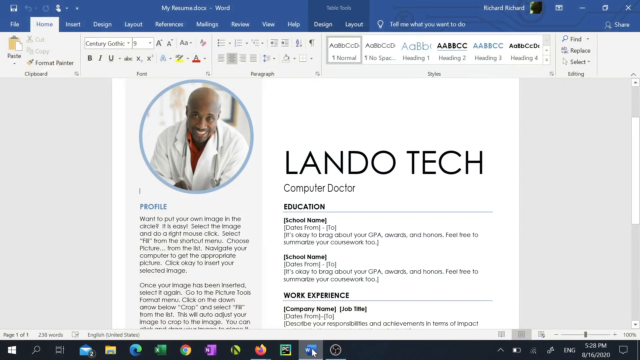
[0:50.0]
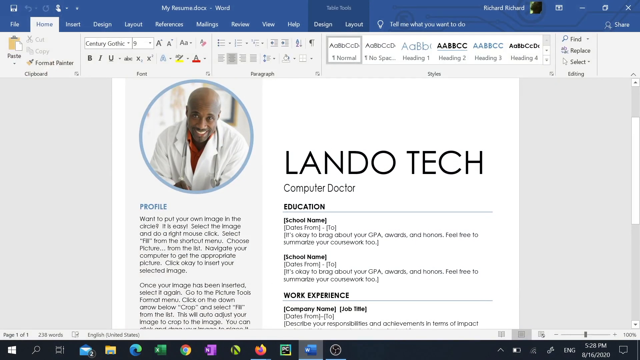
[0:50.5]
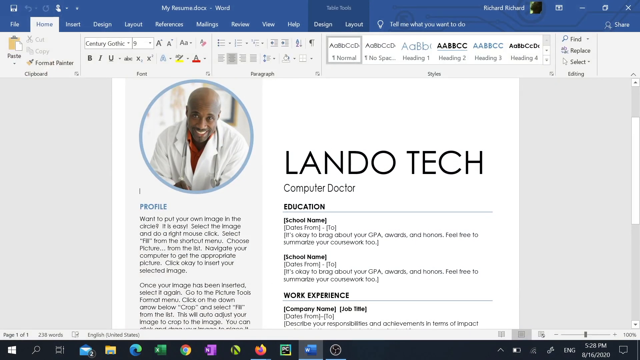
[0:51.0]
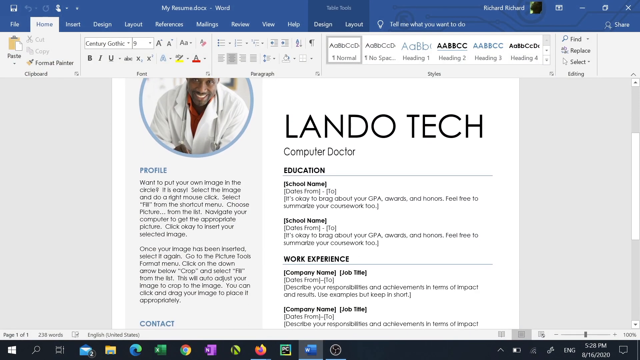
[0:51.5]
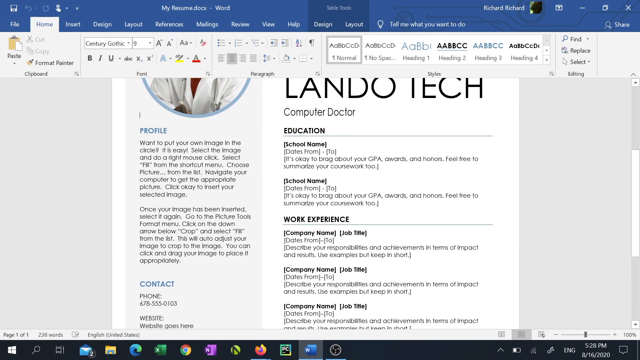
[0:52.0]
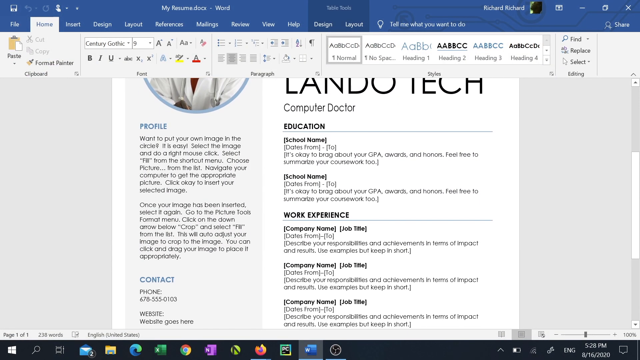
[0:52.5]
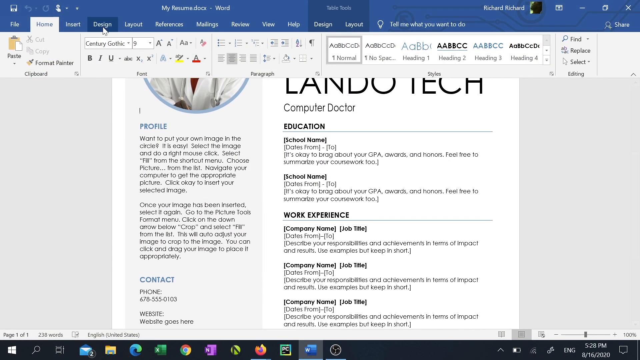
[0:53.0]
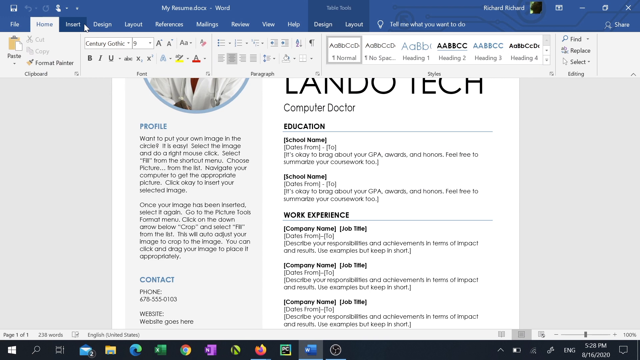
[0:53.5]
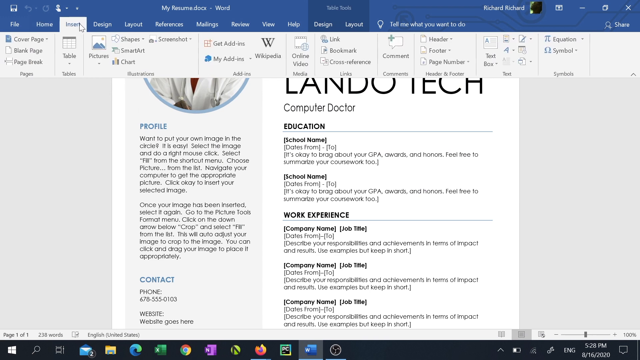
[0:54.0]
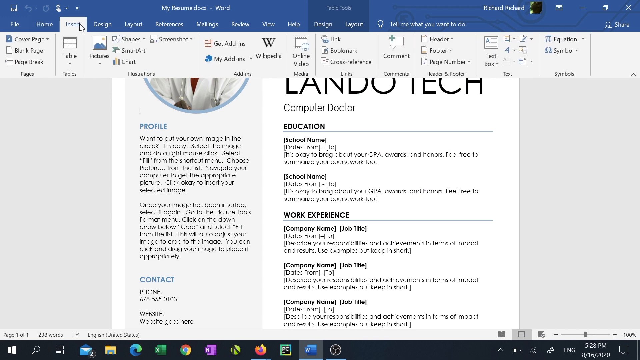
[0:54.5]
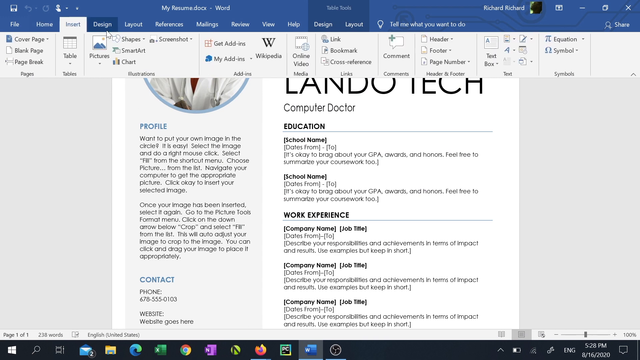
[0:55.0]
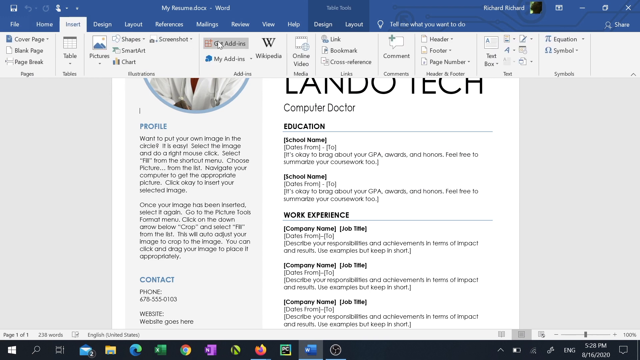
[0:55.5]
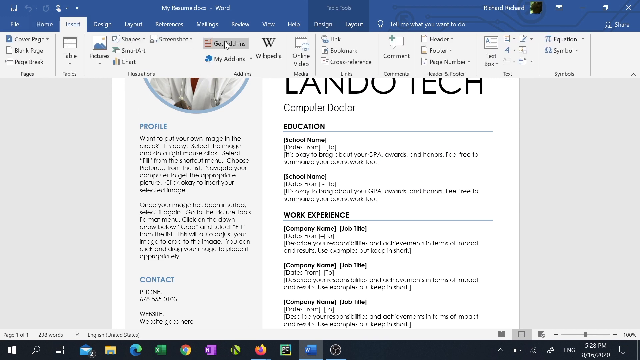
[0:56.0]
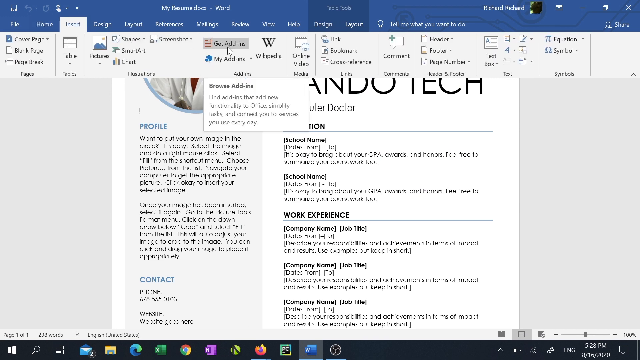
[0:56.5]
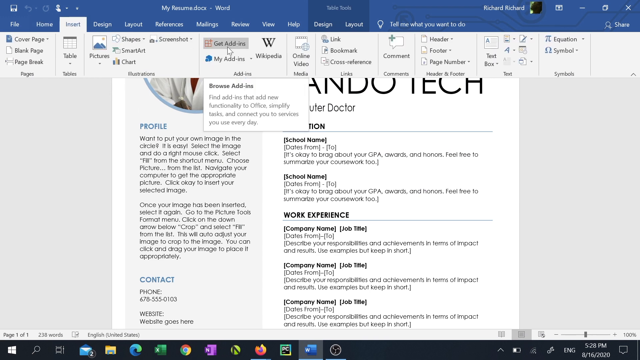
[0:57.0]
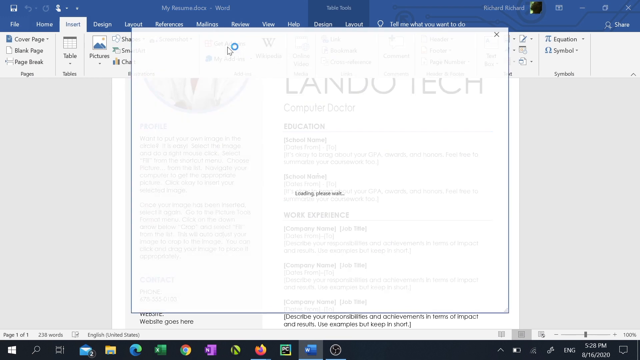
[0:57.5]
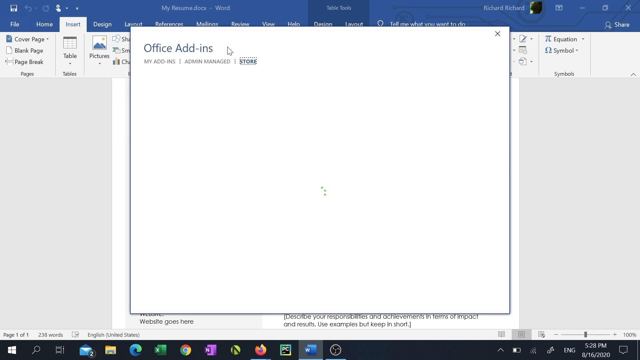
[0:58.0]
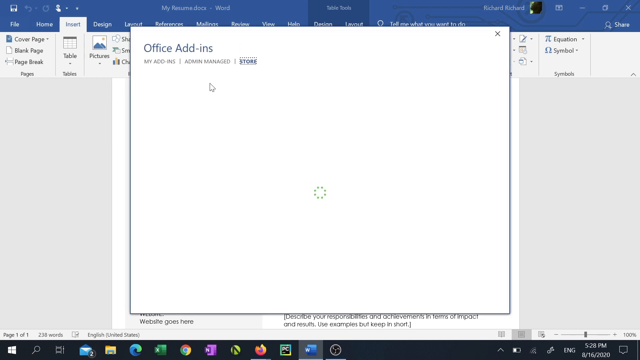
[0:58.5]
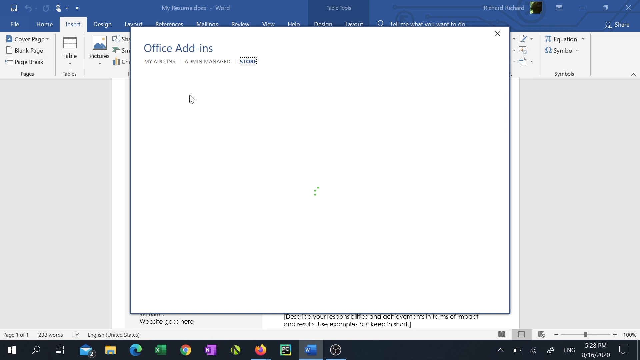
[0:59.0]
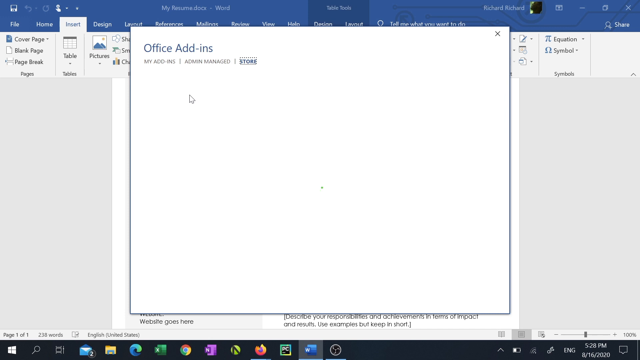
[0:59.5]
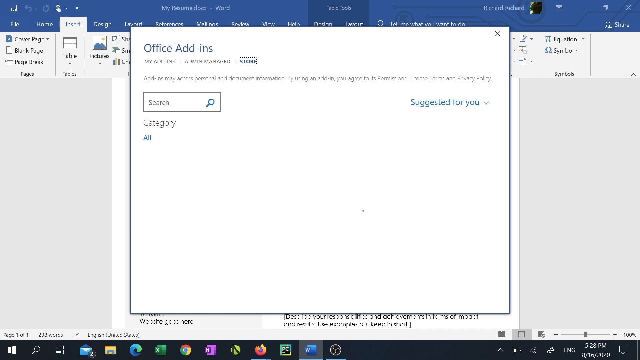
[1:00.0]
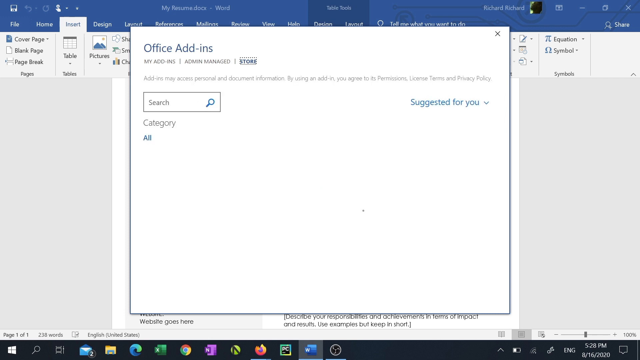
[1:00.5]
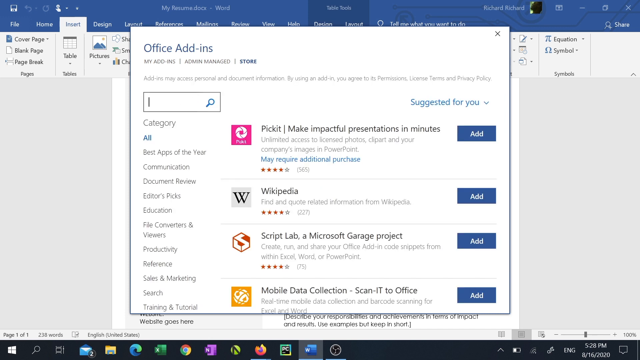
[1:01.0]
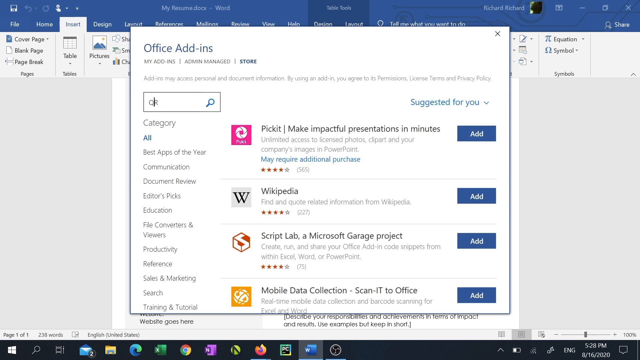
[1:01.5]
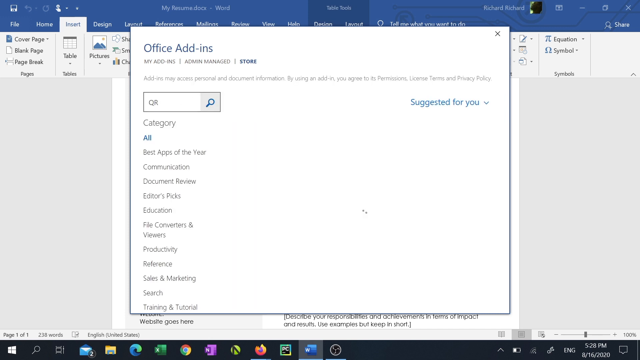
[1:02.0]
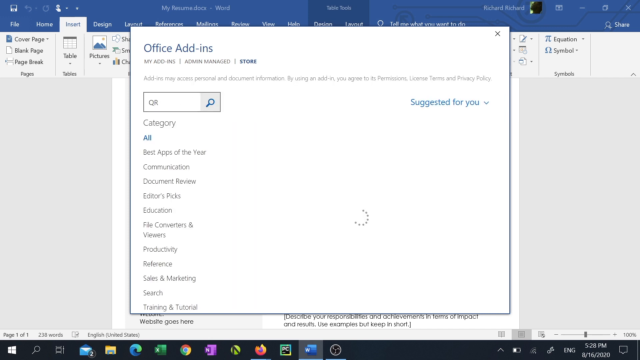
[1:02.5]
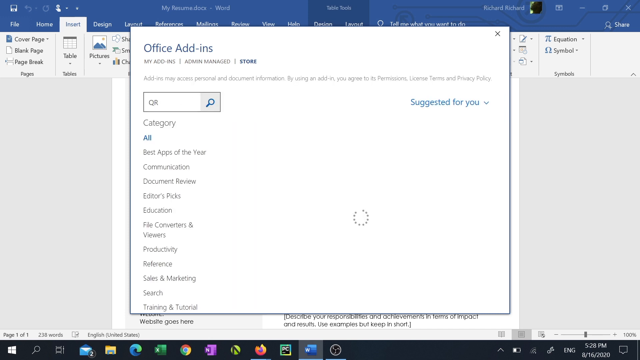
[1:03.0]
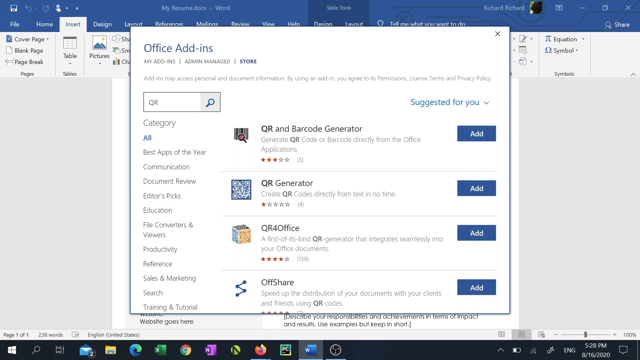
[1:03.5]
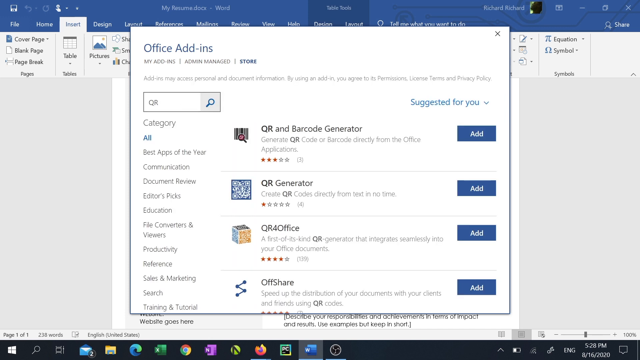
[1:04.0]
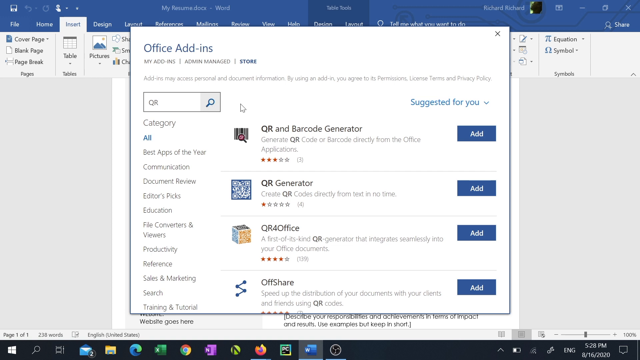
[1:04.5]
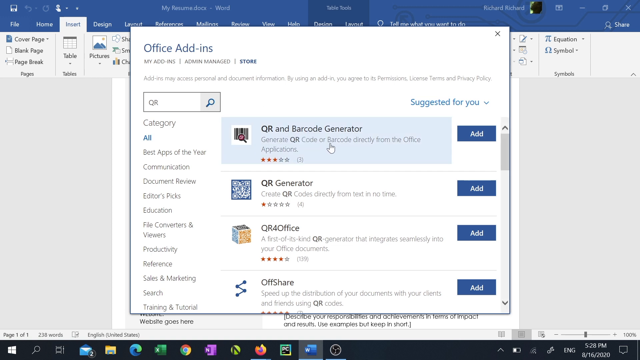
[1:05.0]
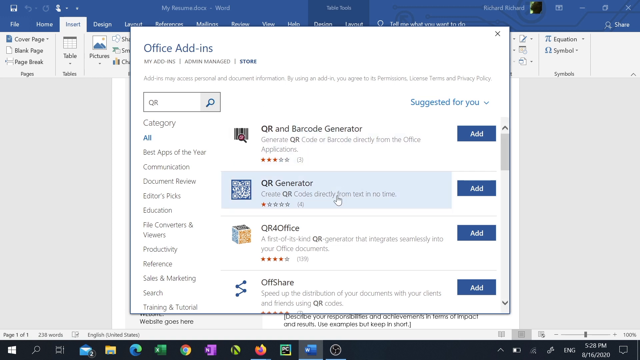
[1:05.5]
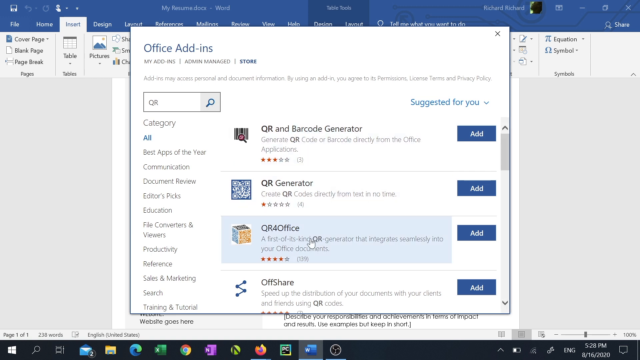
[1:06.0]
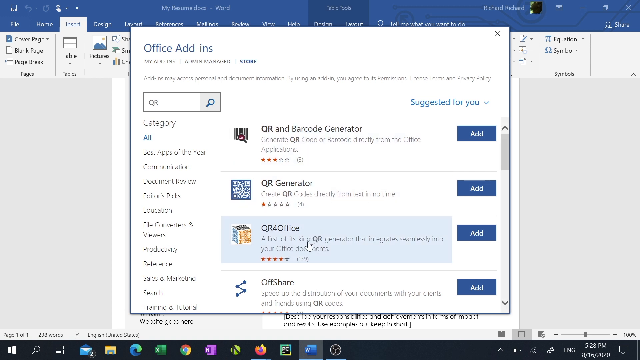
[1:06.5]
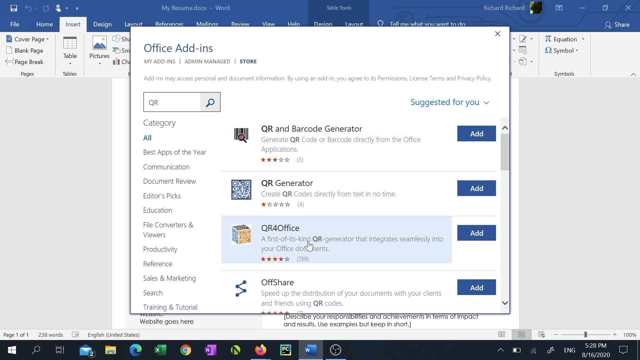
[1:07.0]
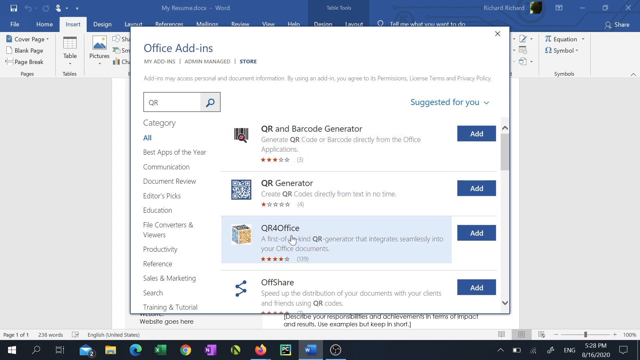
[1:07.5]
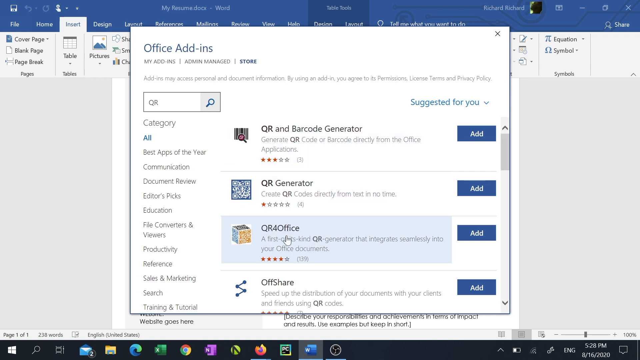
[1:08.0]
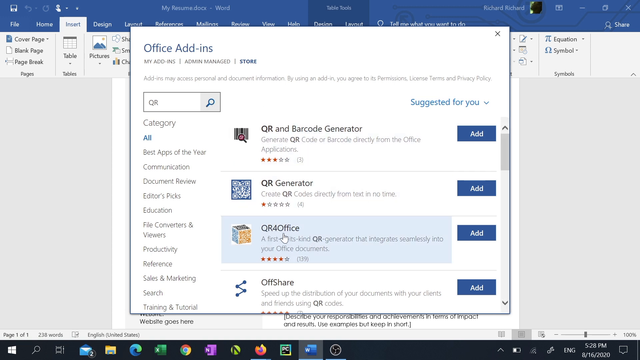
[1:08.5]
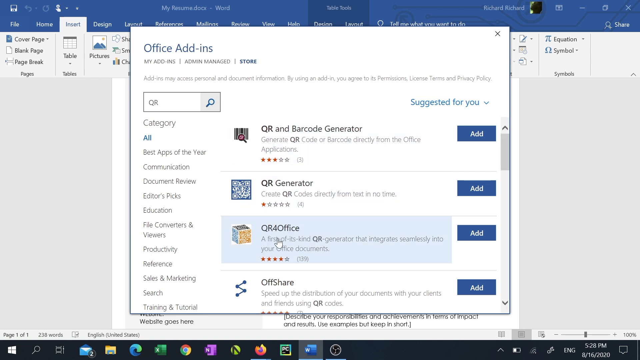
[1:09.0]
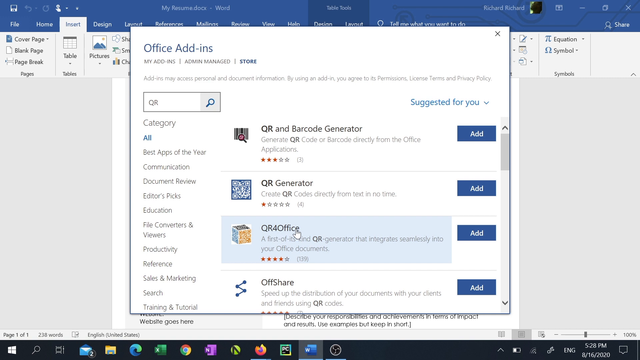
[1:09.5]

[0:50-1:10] What looks like Microsoft Word is open, showing a page filled in with text and images. In the upper left corner is a circle containing a smiling black man wearing a white doctor's lab coat with a stethoscope around his neck. Underneath him it says "Profile", followed by text reading "Want to put your own image in the circle? It is easy. Select the image and do a right mouse click." The document is probably a pre-made template. On the right side it says "Lando Tech Computer Doctor", and underneath are "Education", "School Name", "Work Experience" and a lot of text. The mouse moves around, and at the top it reaches "Get Add-ons", which opens a screen titled "Office Add-ins" with a search bar. The user types "QR" into the search bar, many QR options appear on the right side, and the cursor moves to one that says "QR Office", hovering over it and moving around it.